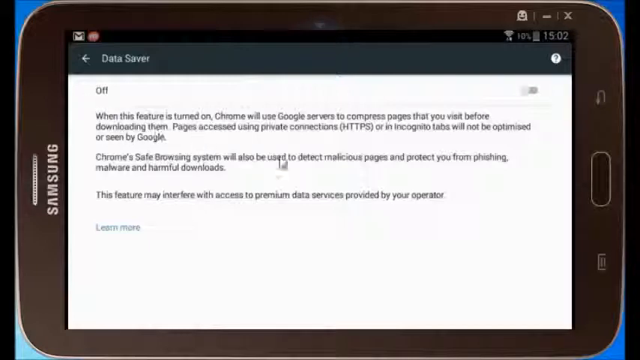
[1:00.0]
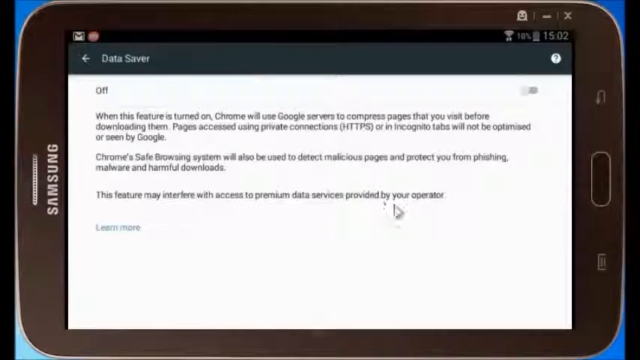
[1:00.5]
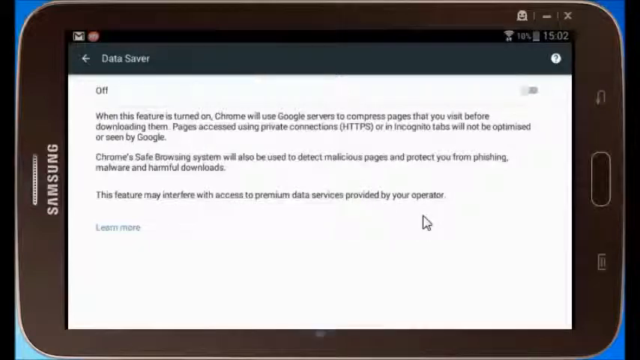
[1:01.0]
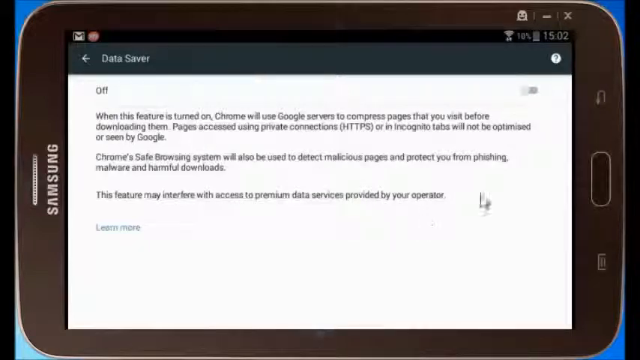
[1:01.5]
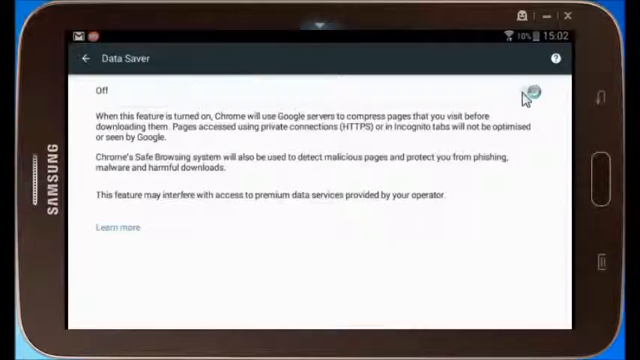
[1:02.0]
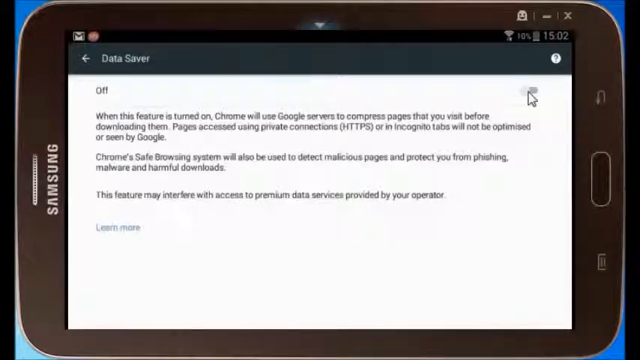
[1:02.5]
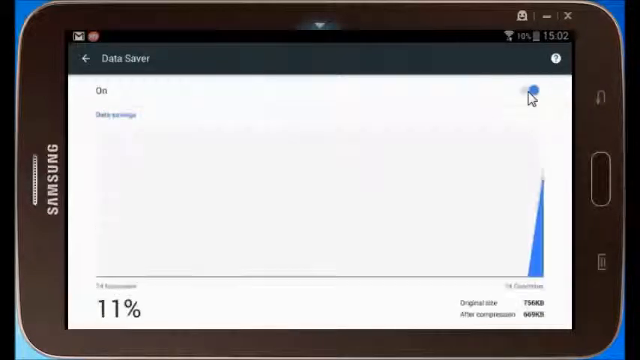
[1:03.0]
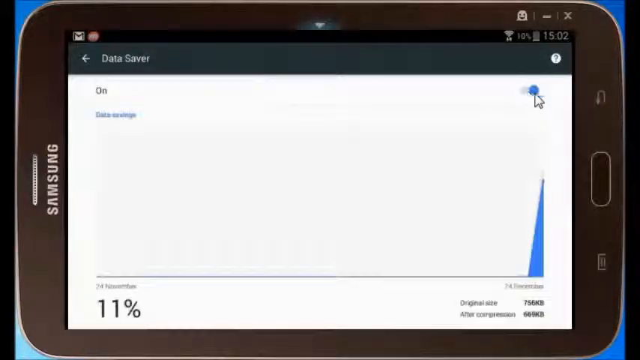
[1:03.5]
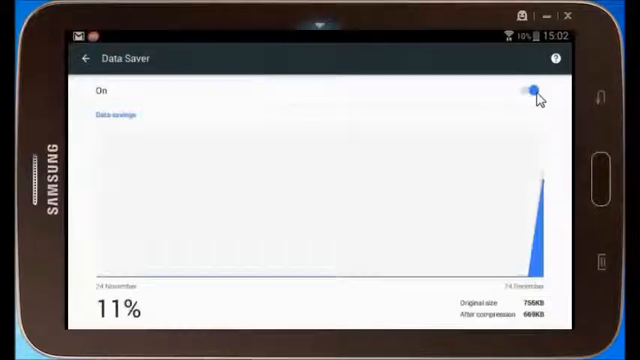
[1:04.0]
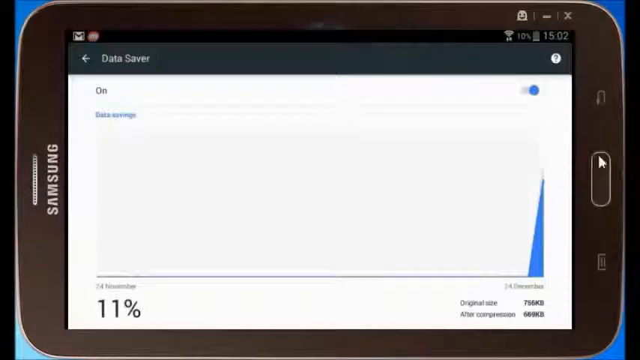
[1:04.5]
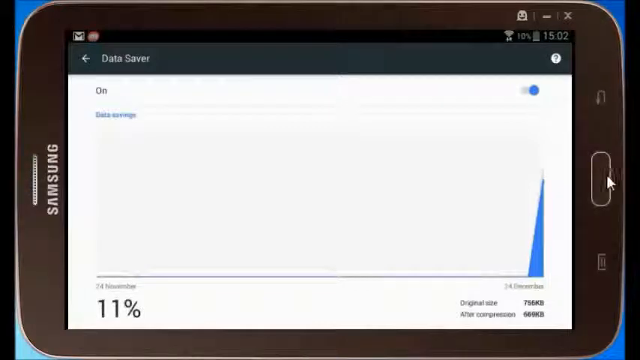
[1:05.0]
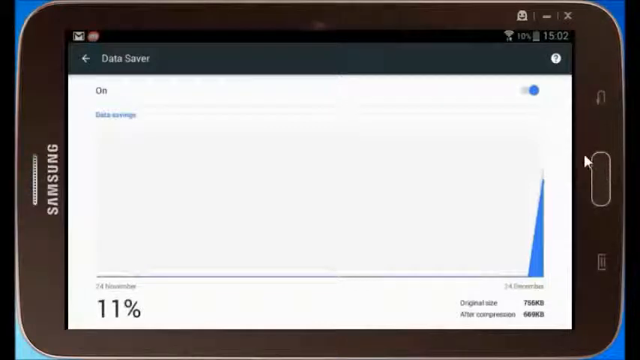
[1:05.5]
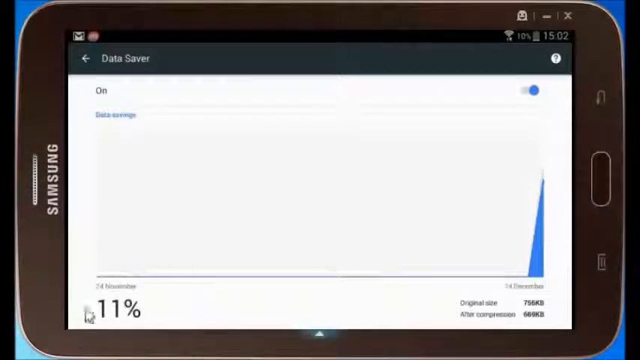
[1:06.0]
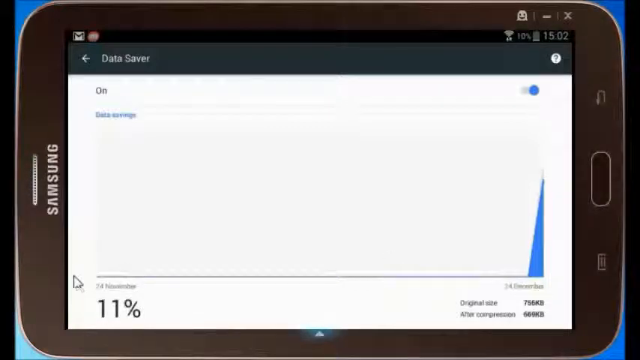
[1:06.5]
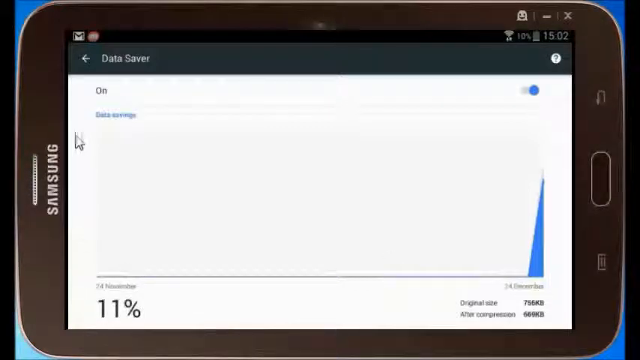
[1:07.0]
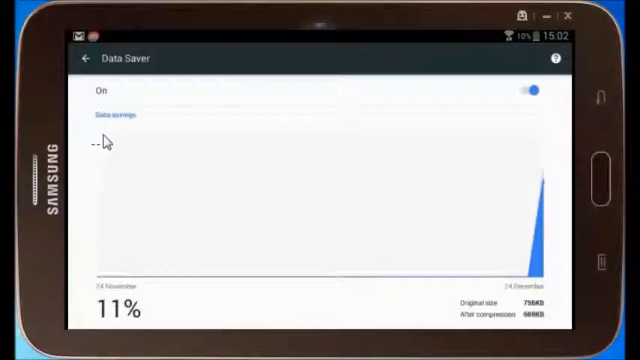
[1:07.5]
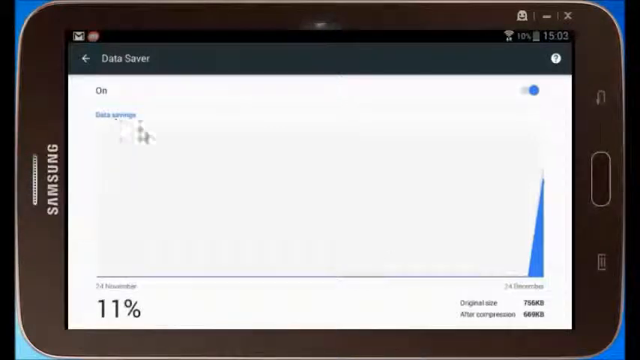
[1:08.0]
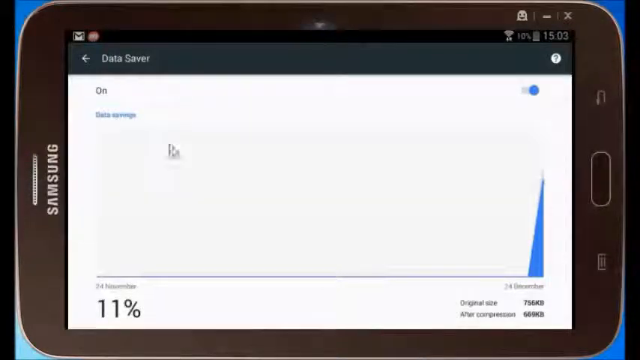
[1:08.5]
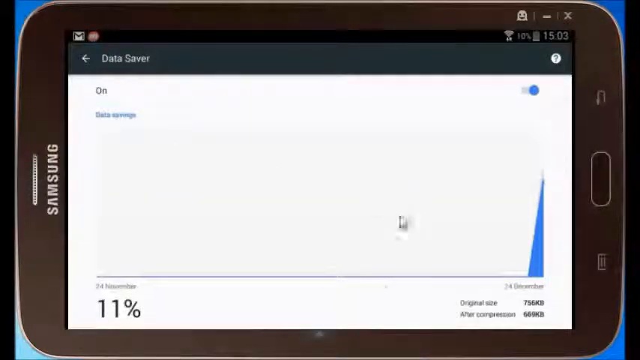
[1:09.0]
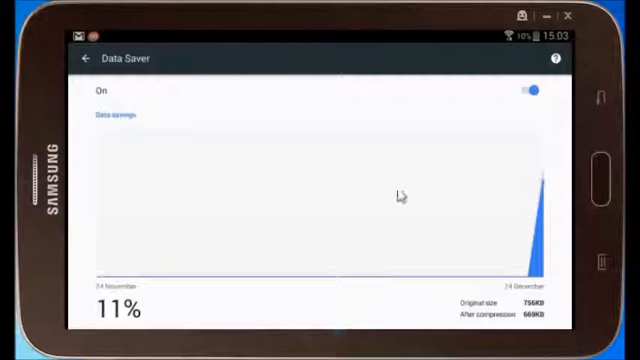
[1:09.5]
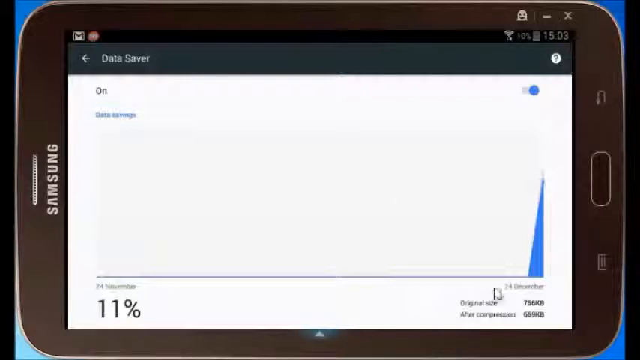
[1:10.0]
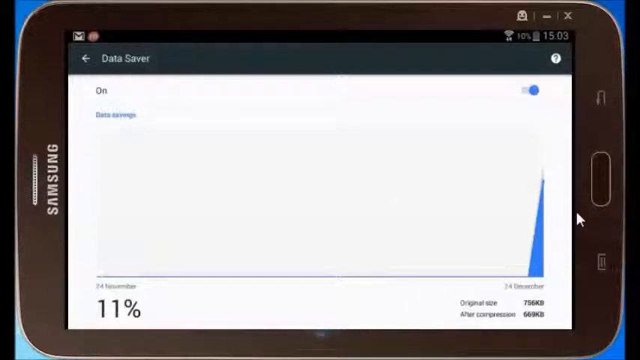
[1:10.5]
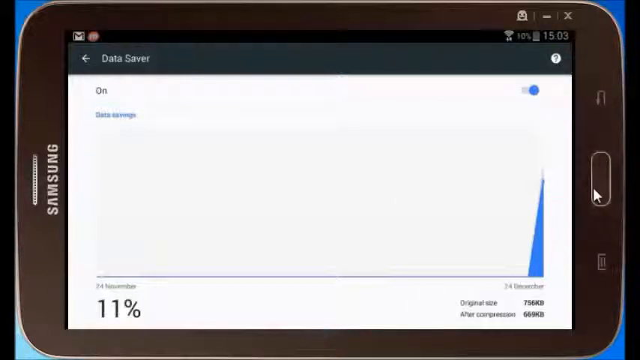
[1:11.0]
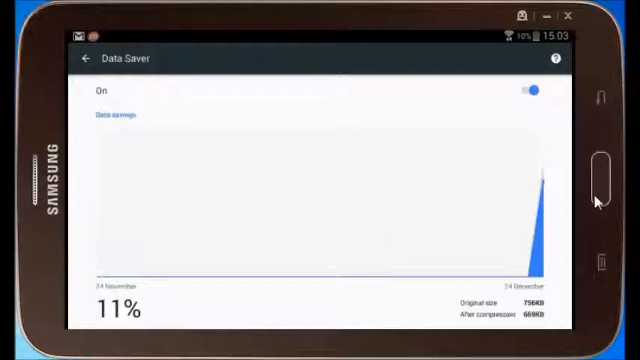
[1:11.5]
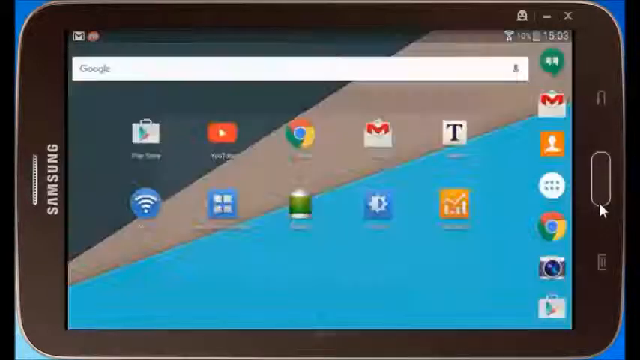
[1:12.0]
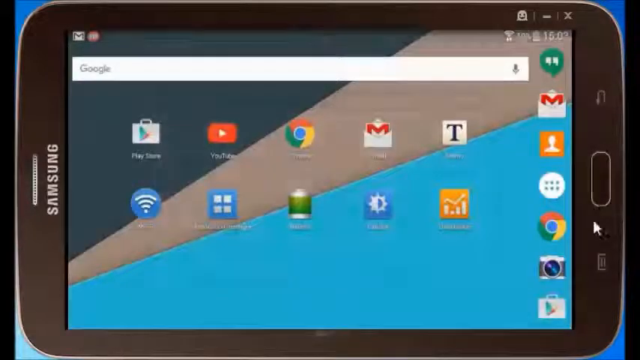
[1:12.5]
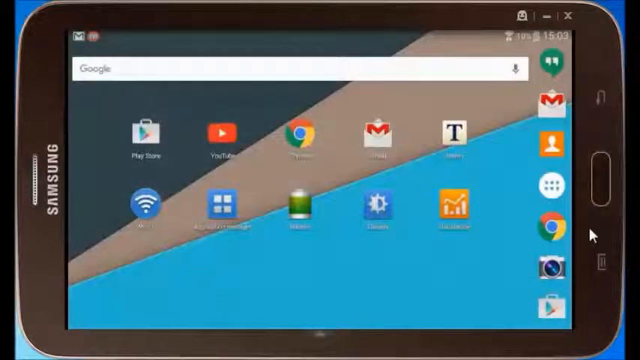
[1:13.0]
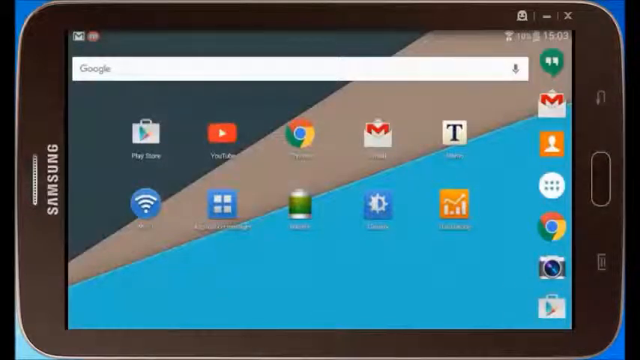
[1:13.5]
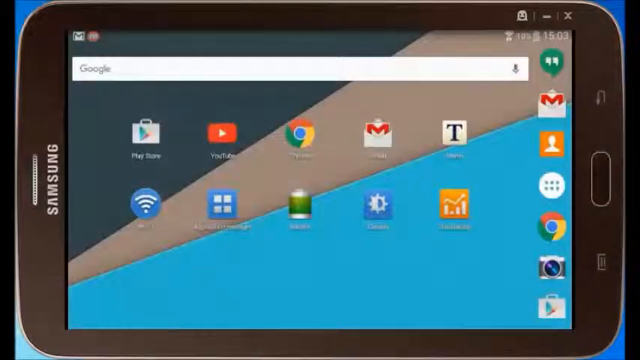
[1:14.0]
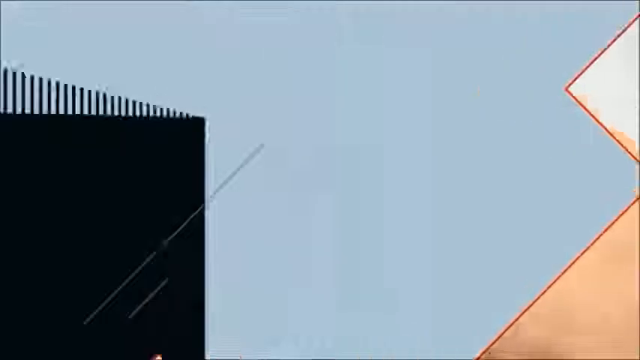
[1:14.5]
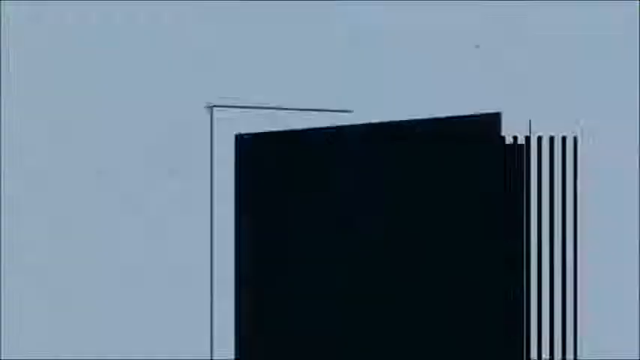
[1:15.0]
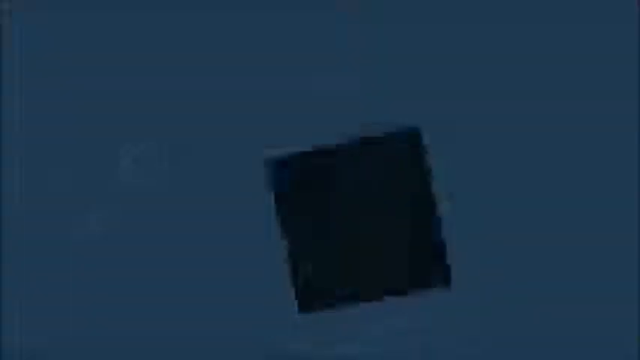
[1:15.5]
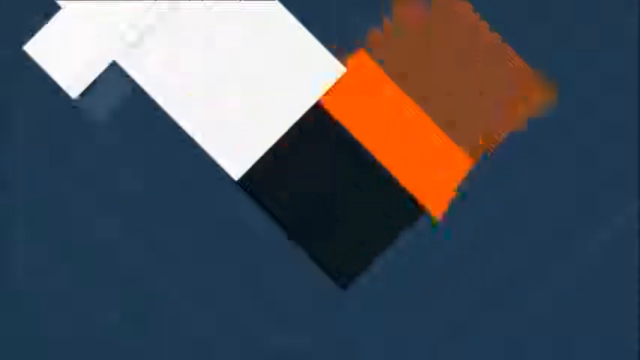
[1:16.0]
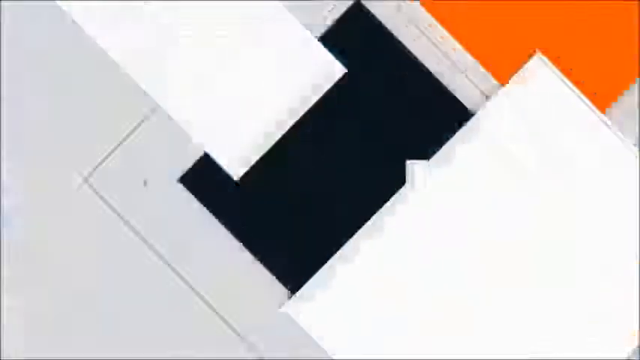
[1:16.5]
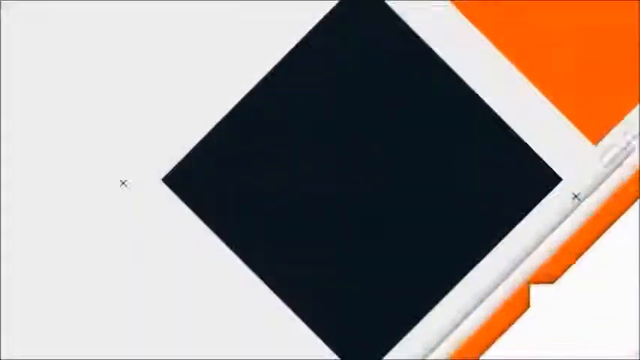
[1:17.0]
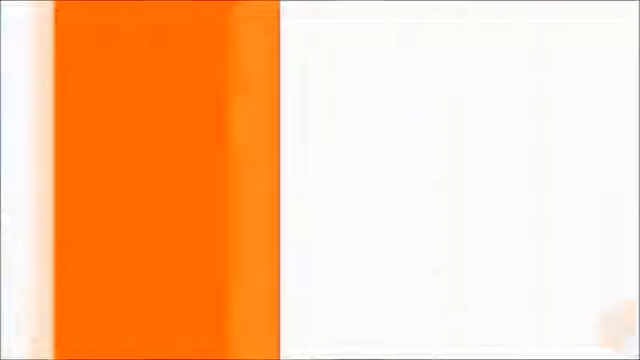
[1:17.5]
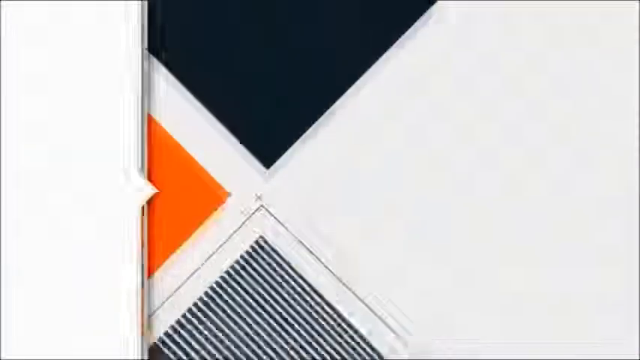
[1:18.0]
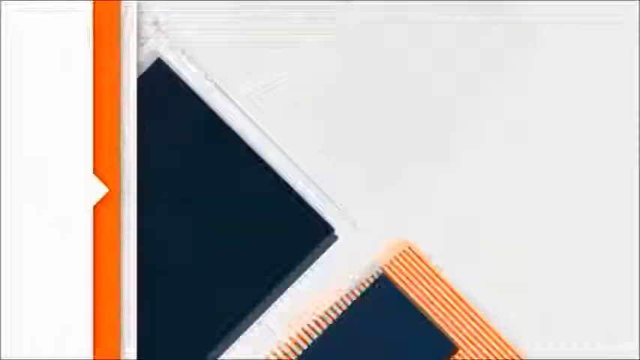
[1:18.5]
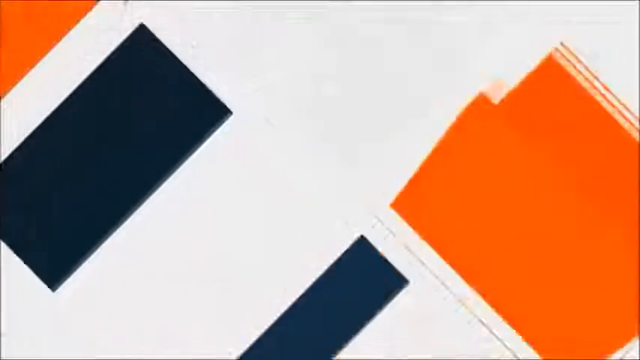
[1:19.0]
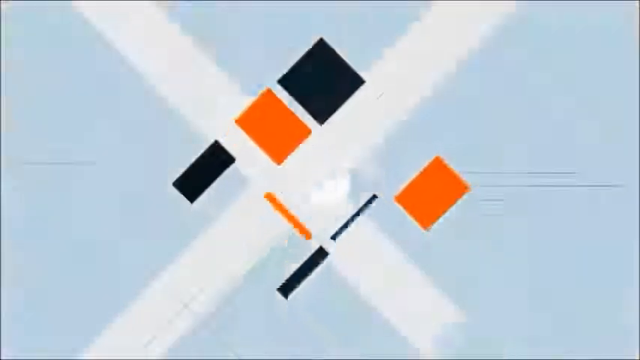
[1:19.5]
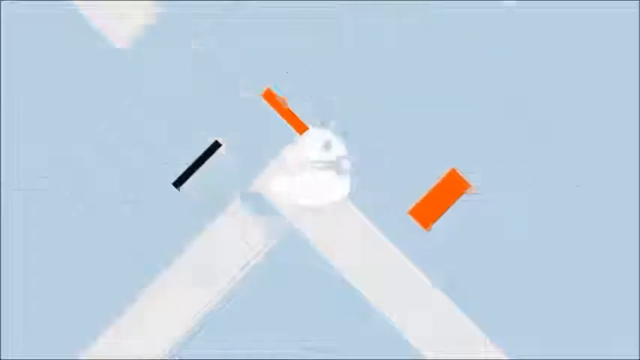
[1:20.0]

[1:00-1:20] The Data Saver page in the Google Chrome app is shown. The corner shows 10% battery and still 3:02 in the afternoon, and there is apparently an unread email. The toggle is switched on, and a graph immediately appears with a blue triangle at its end and a fairly high data usage percentage. The cursor circles the triangle, then circles the number 11% in the left corner, which appears to correspond to about 757 kilobytes before compression. The cursor clicks the home button, the home screen appears, and the video ends with another graphic of orange, blue and white boxes along with a mesh shape, like the graphic that opened the video.